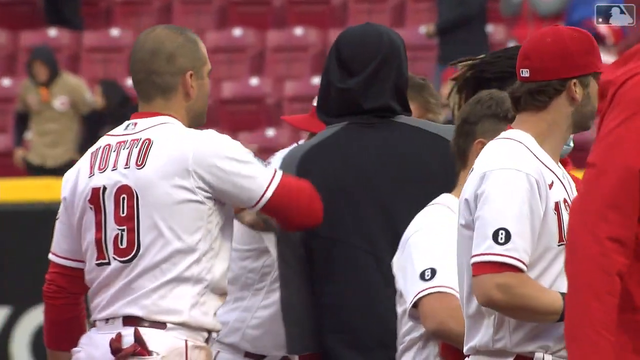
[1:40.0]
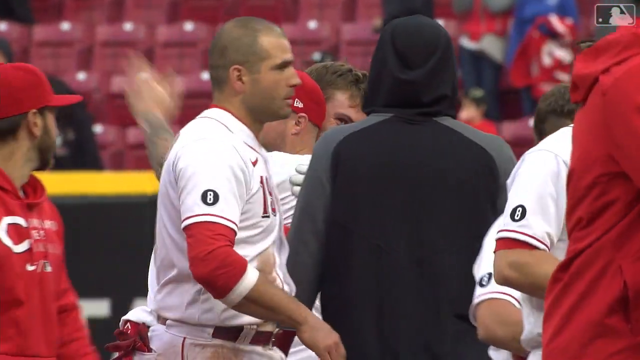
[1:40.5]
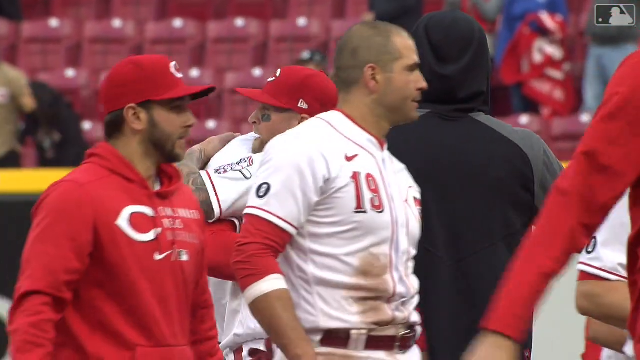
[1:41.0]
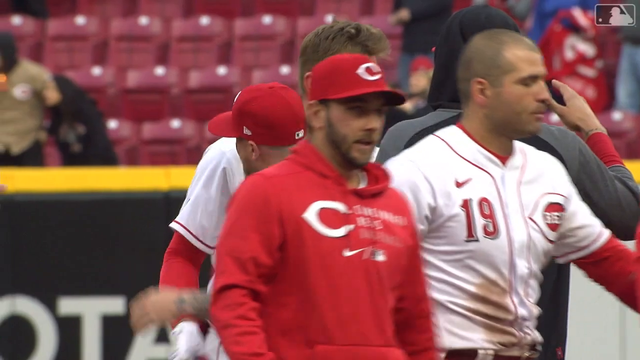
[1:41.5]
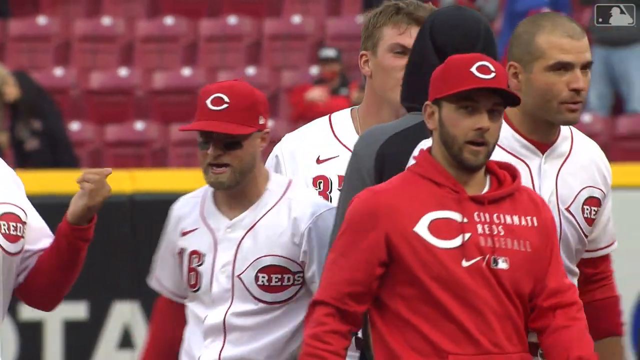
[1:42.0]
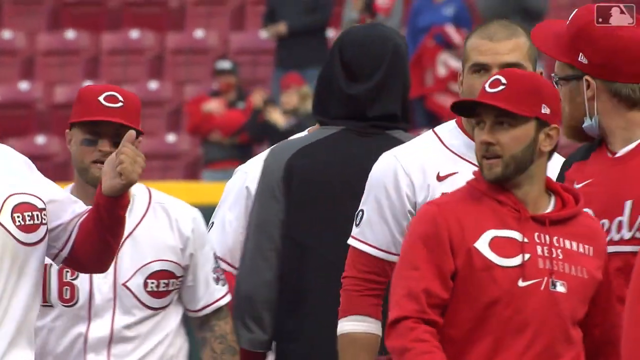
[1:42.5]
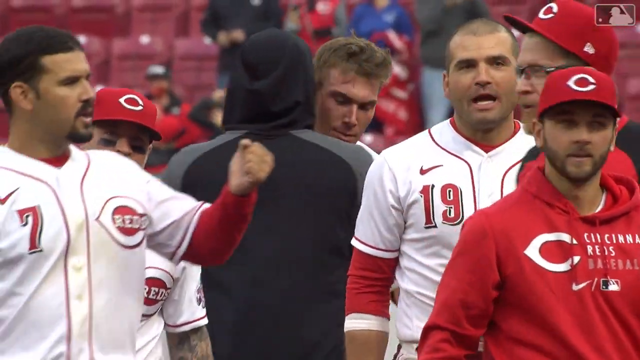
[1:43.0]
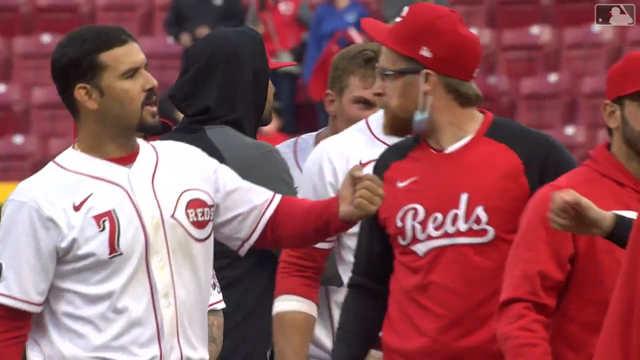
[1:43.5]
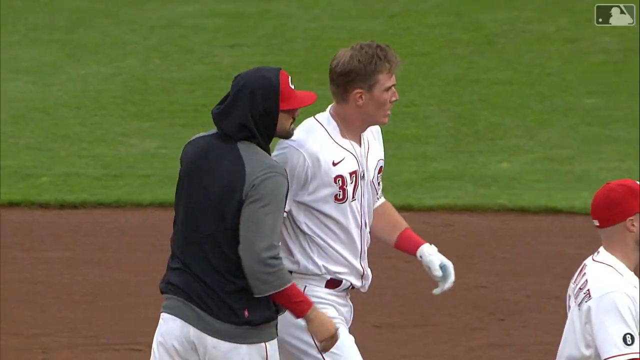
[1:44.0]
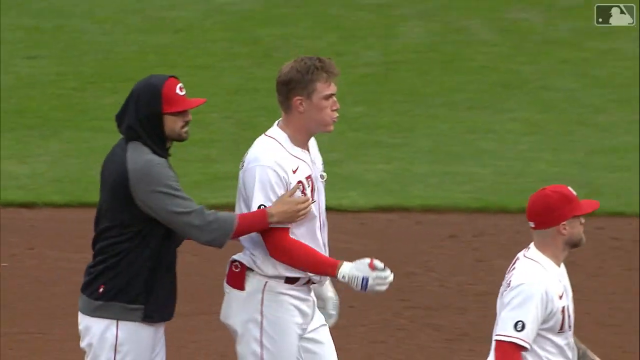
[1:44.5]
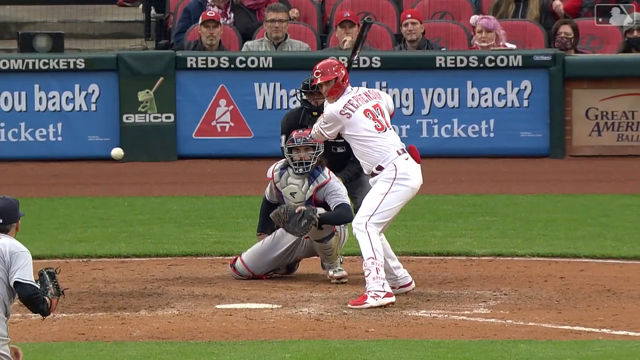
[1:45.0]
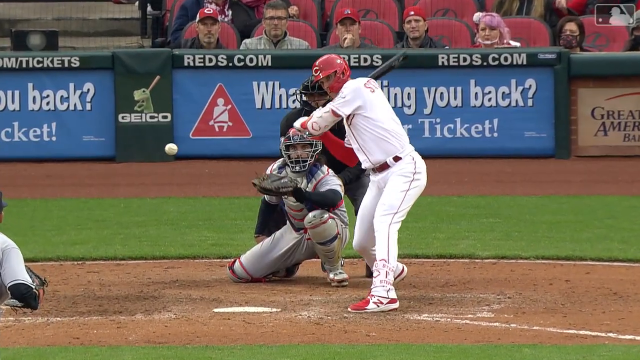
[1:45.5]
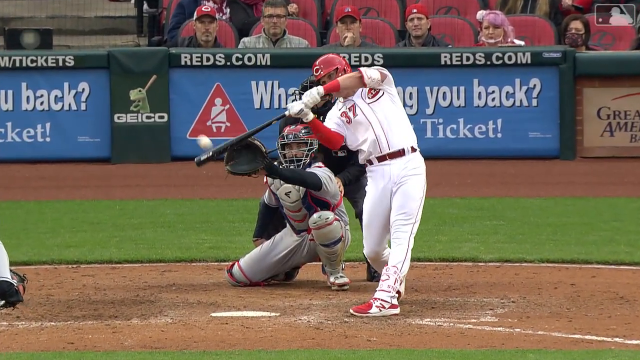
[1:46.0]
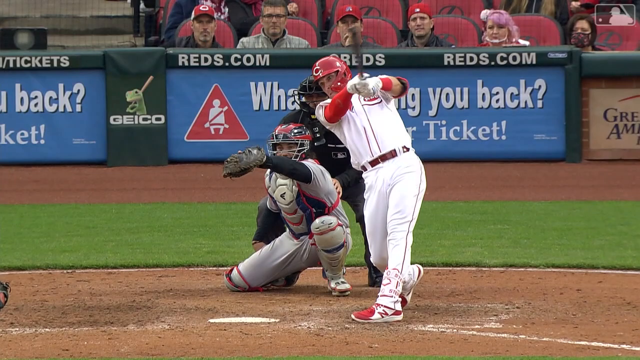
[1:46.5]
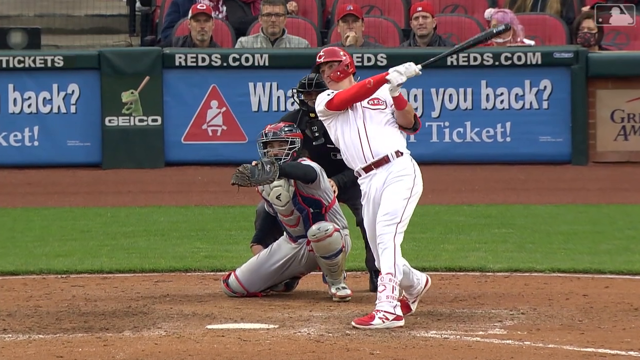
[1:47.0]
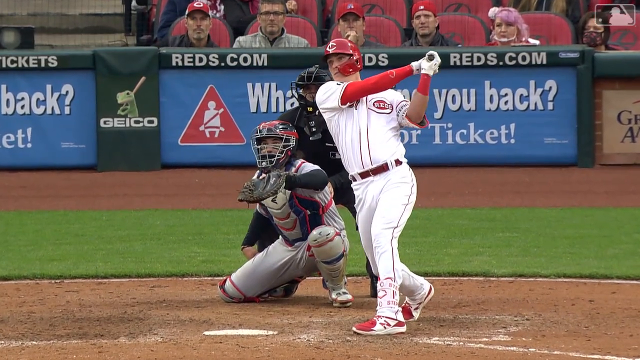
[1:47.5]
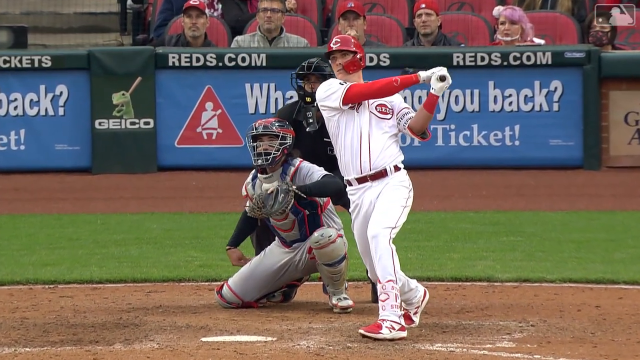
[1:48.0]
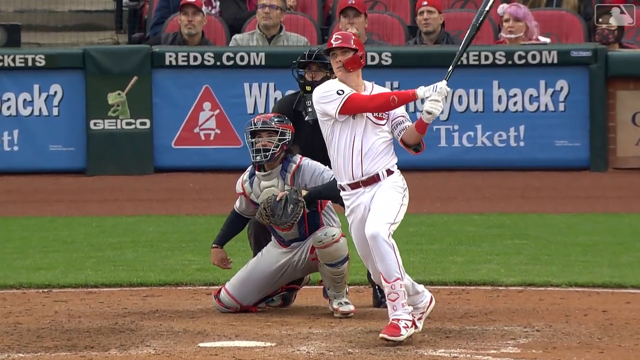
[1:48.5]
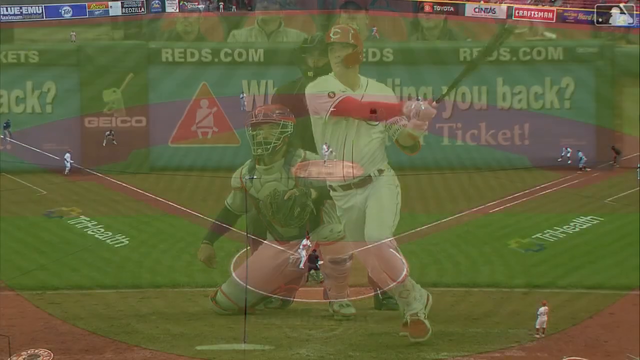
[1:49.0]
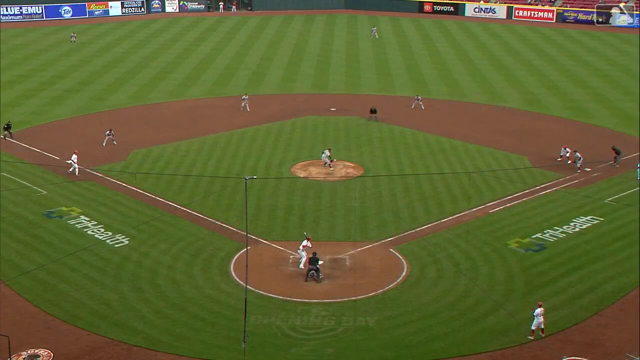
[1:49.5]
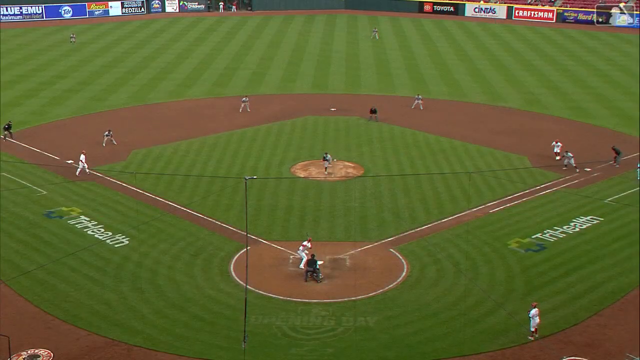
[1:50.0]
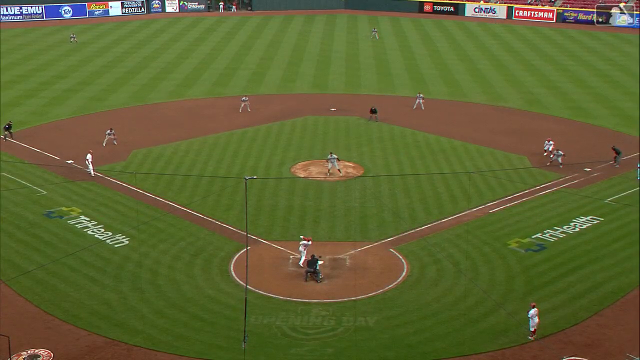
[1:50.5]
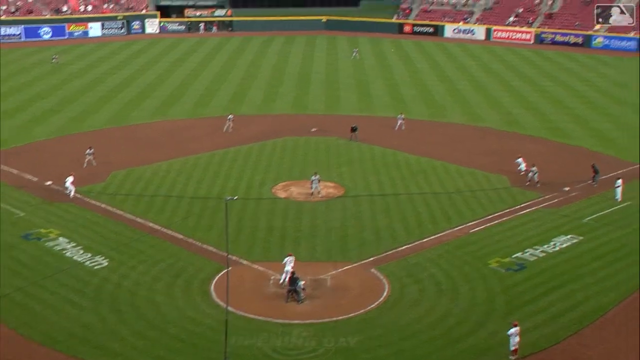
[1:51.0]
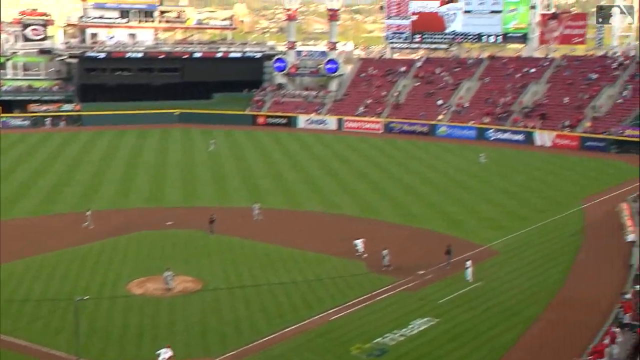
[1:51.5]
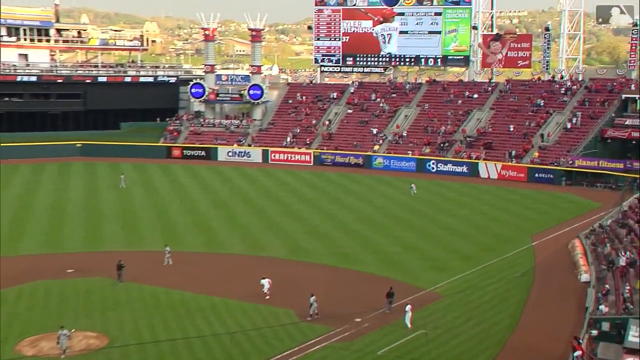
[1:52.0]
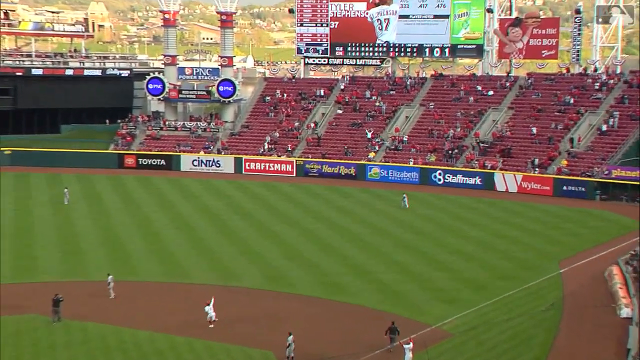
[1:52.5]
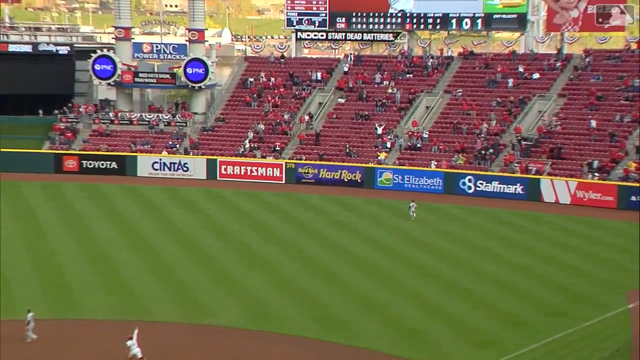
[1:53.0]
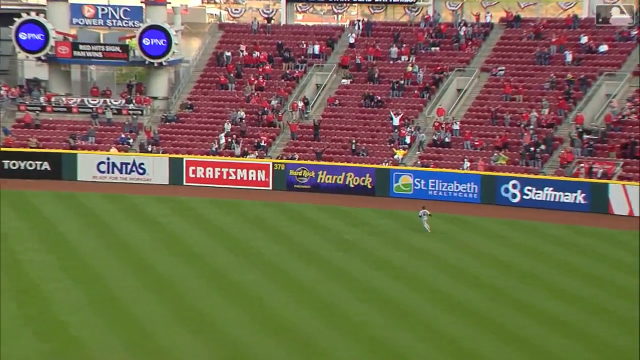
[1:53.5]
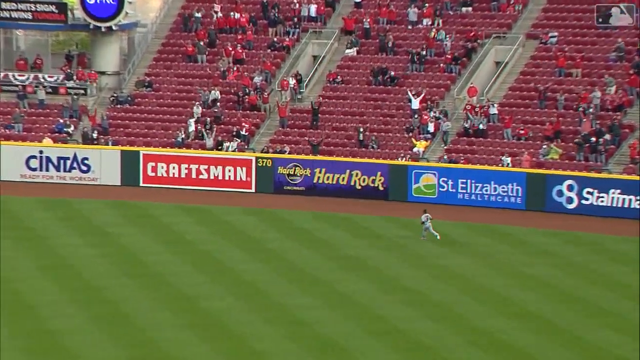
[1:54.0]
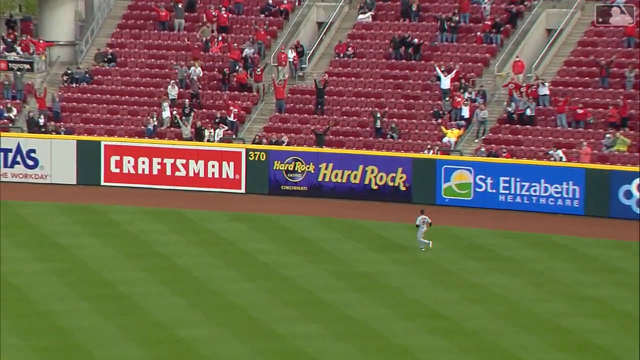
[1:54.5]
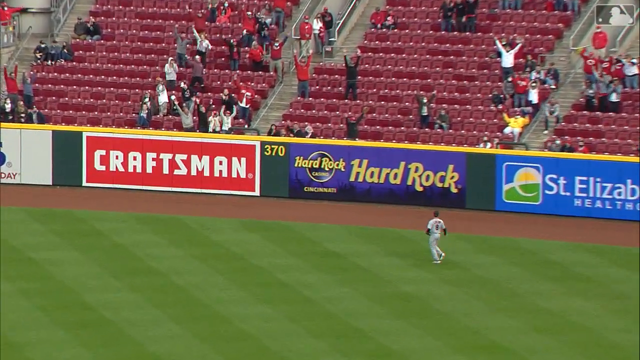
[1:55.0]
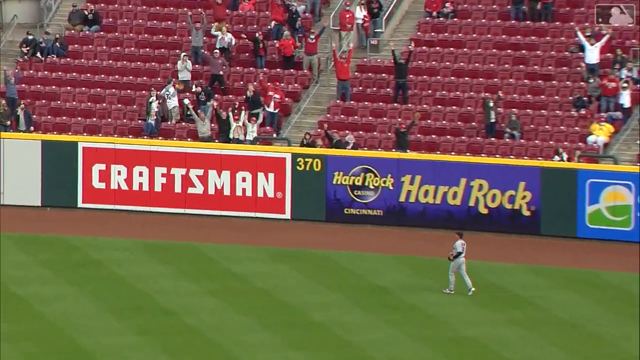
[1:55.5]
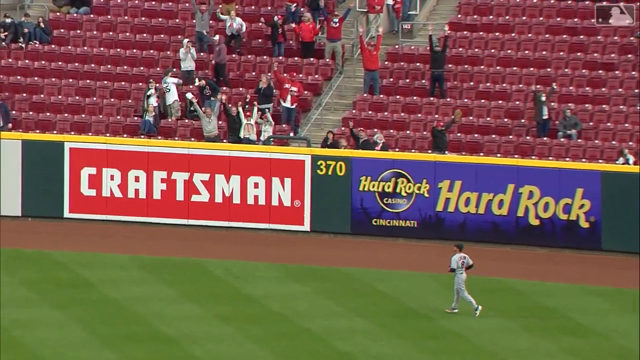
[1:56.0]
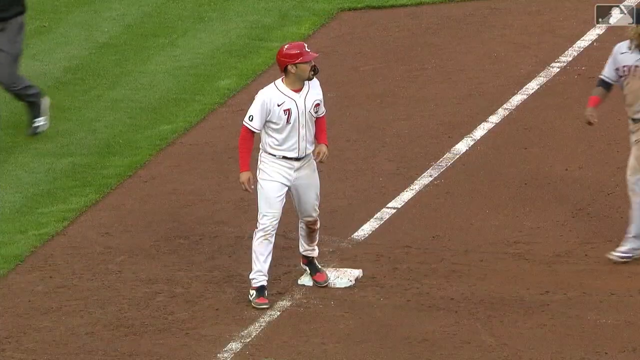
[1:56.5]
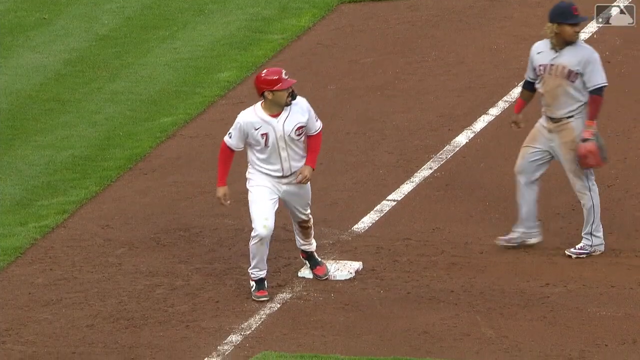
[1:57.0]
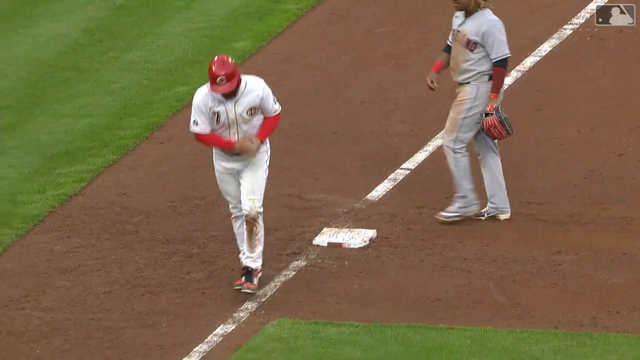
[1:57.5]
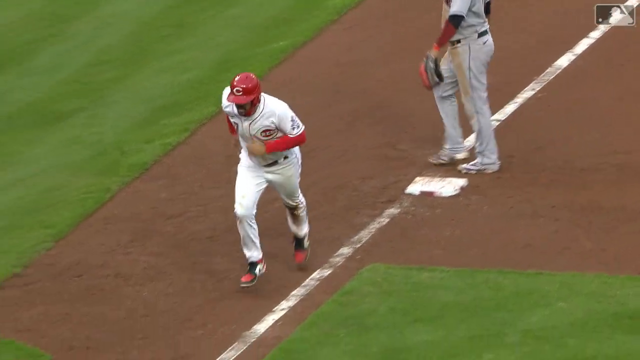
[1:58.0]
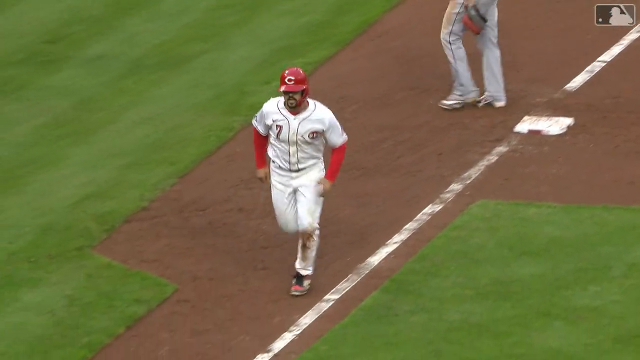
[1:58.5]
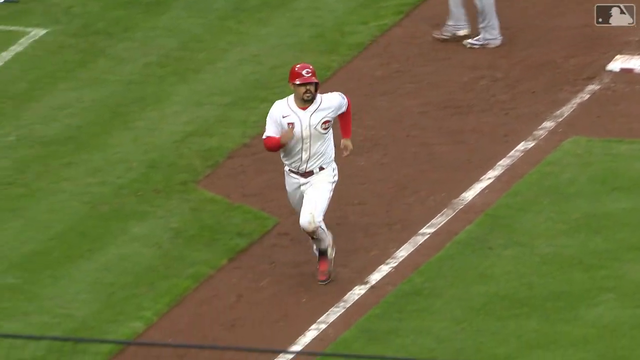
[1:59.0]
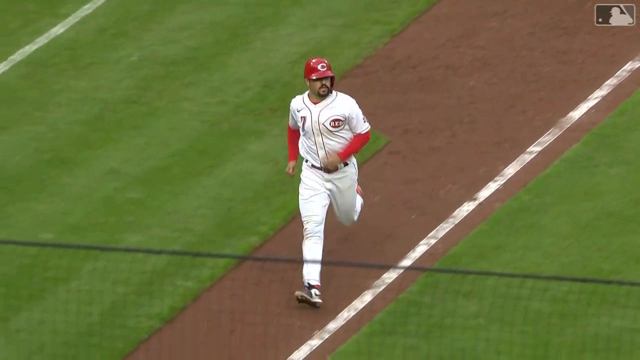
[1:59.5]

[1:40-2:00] The players and coaches are seen walking away from each other, and some are still congratulating each other. A slow-motion replay then shows number 37, the player who was being congratulated, hitting the ball with the bat. Another view, from more of an aerial standpoint, follows the ball as it goes very far back into the field. People in the audience cheer, possibly hoping to catch the ball or be given it by a player. Number 7 is seen running around the field at the end. One of the coaches' hoodies shows that the team is the Cincinnati Reds, and the Reds.com website appears in the background above one of the advertisements on the side of the field. Most of the players have spots of dirt on their uniforms from sliding on the bases.